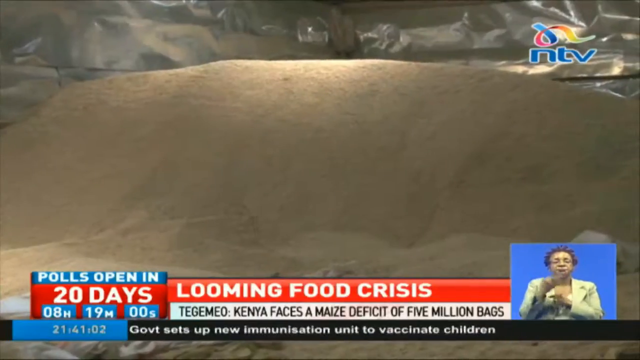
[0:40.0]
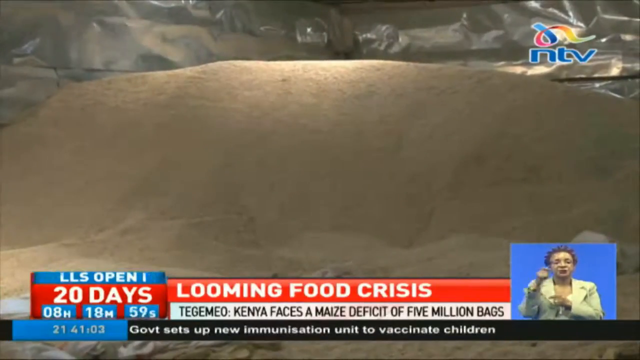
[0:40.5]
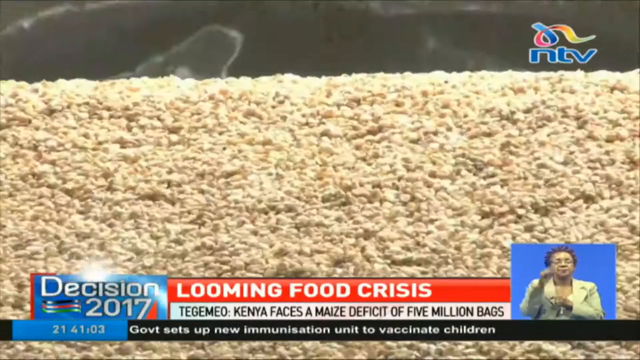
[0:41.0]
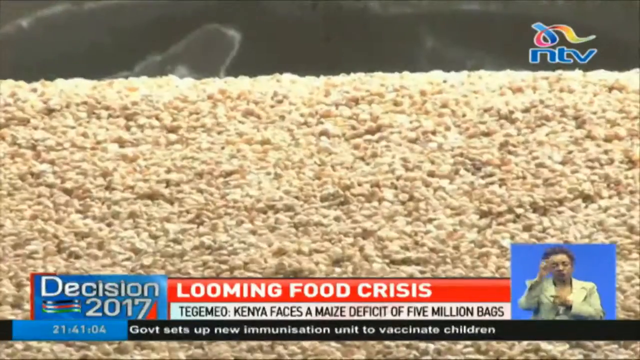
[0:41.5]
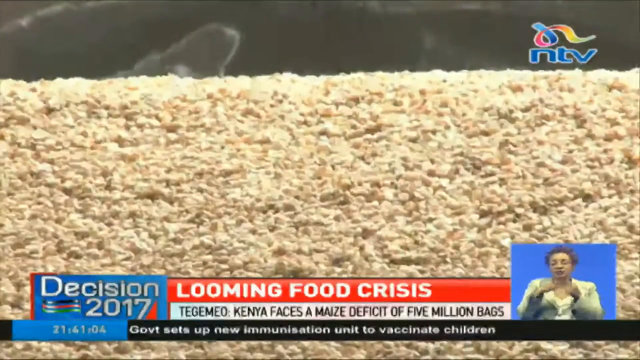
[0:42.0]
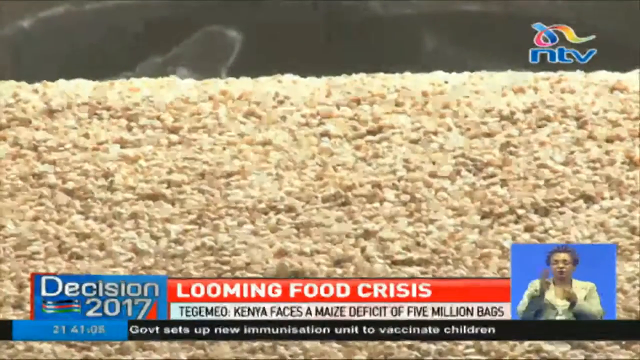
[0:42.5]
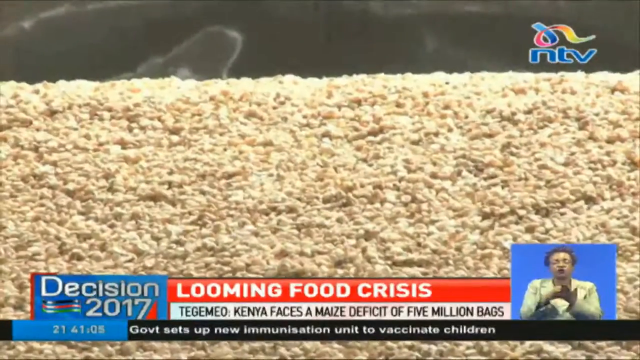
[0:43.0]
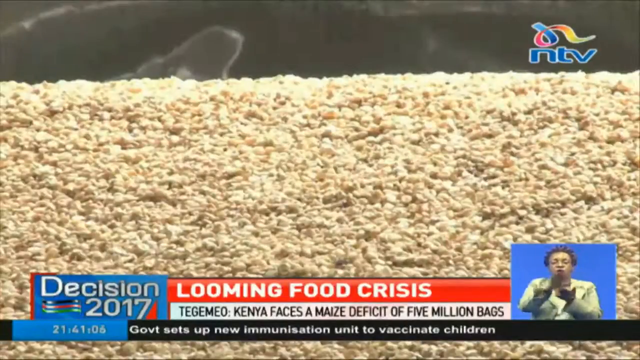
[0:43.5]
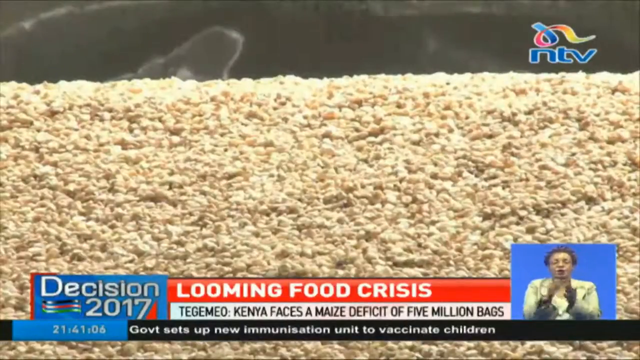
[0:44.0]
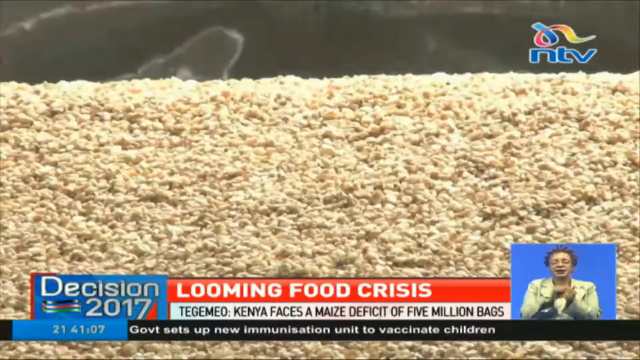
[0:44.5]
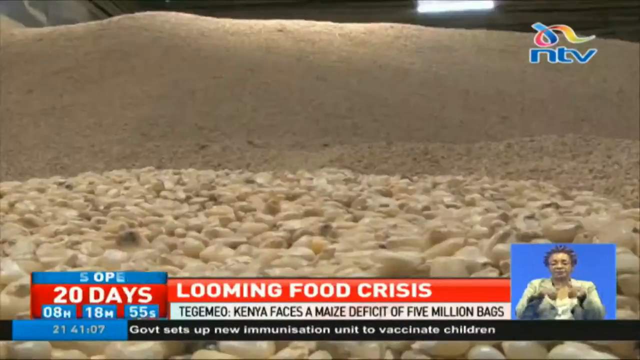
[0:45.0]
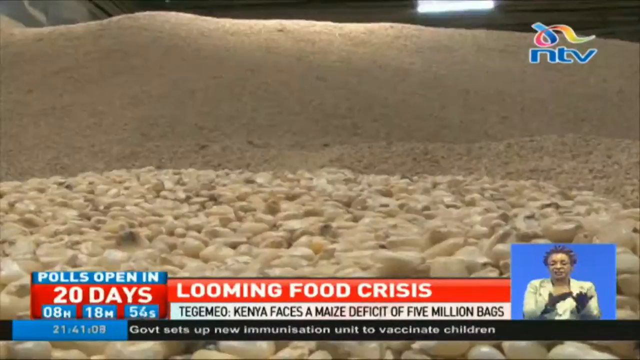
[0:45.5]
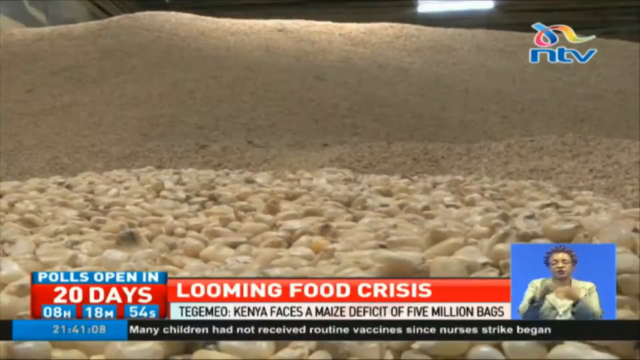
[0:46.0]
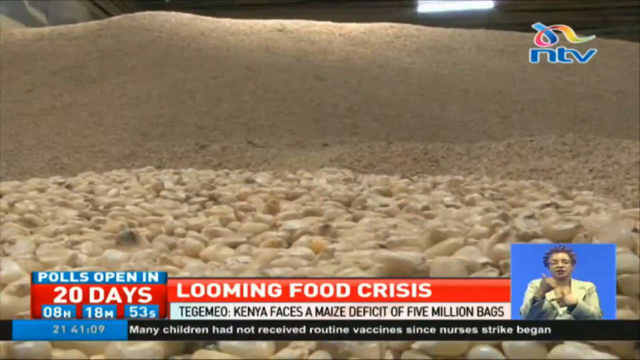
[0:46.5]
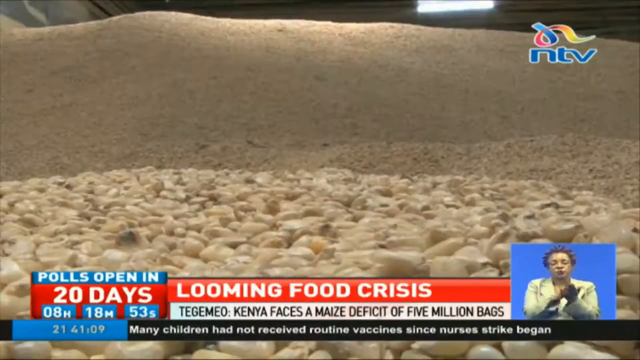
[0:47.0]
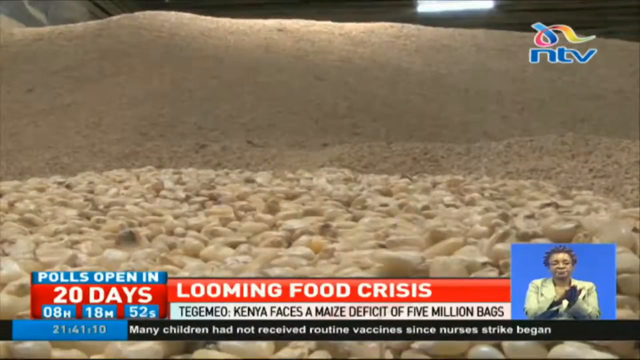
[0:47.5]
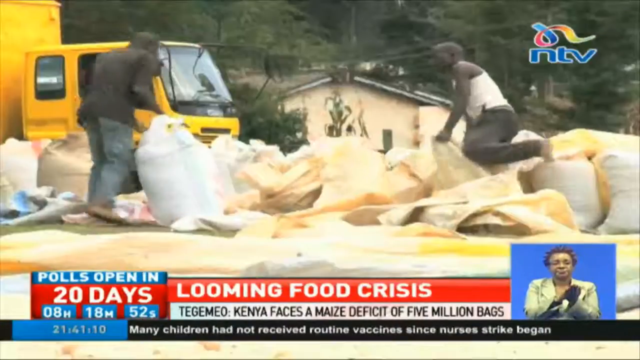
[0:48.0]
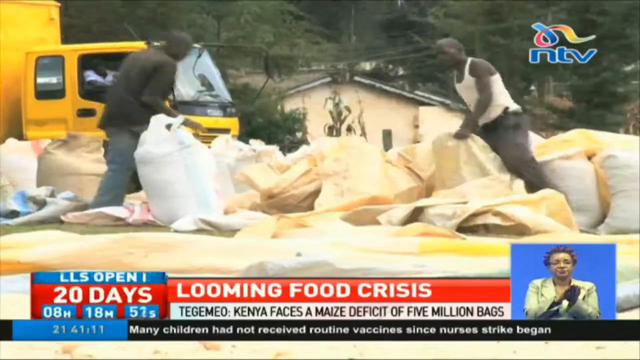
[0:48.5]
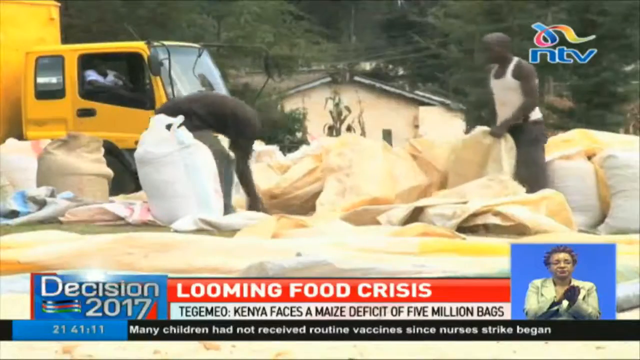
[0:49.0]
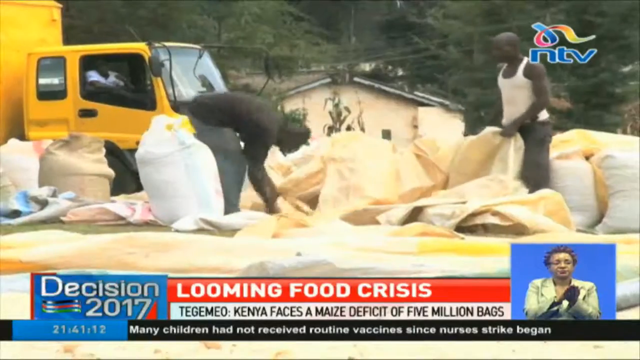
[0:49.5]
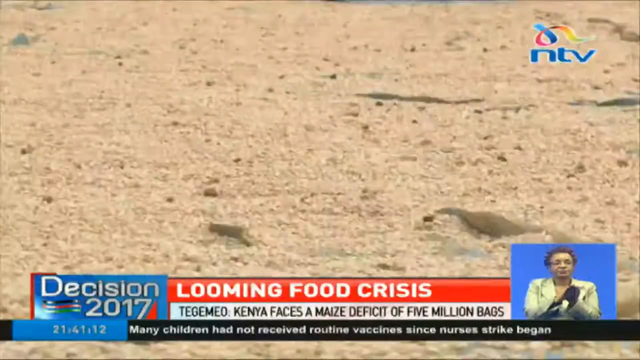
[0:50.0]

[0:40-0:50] "Polls open in 20 days" appears in the lower left-hand corner, followed by "Looming food crisis," and underneath that in black, a place name spelled TEGEMEO and text stating that Kenya faces a maize deficit of five million bags. In the lower right-hand corner, a woman does sign language in front of a blue wall. The product is shown stacked up; it is a really light yellow color. Workers pack bags, and the land area is shown again.